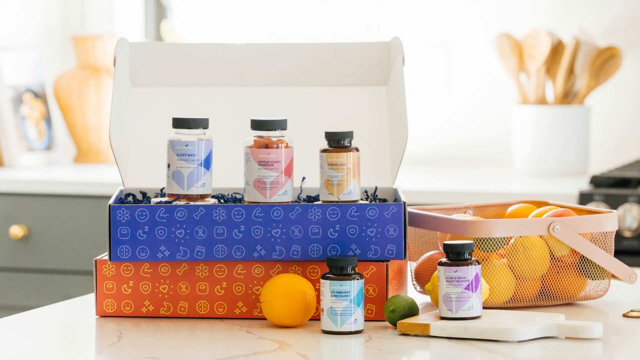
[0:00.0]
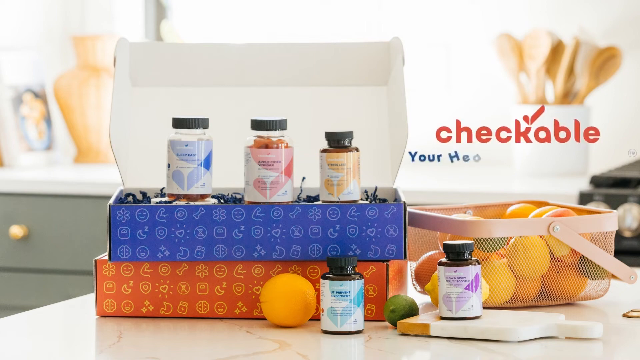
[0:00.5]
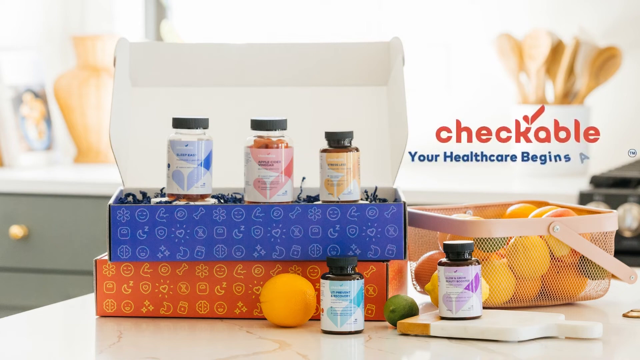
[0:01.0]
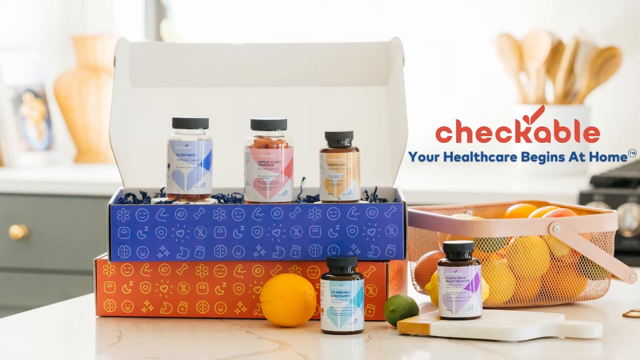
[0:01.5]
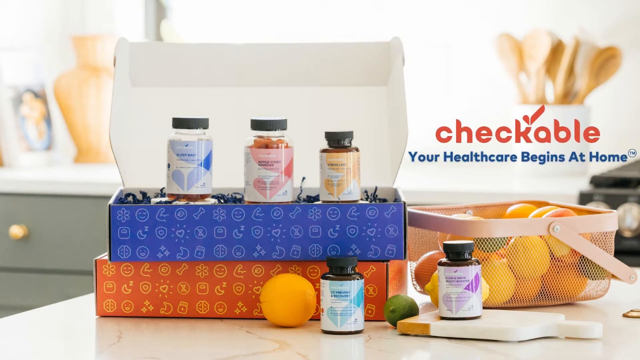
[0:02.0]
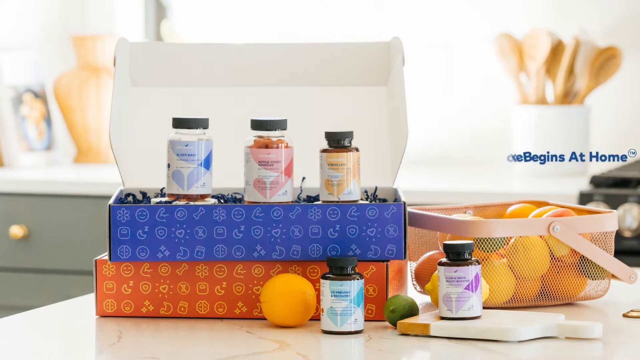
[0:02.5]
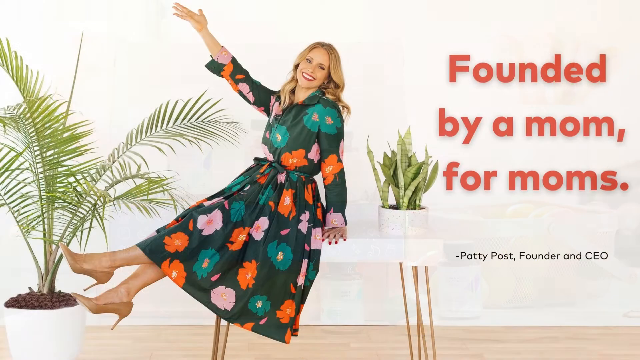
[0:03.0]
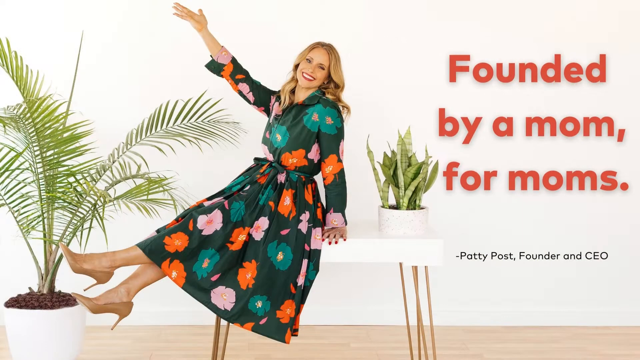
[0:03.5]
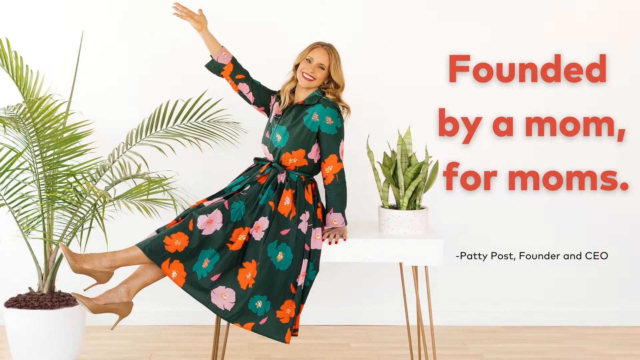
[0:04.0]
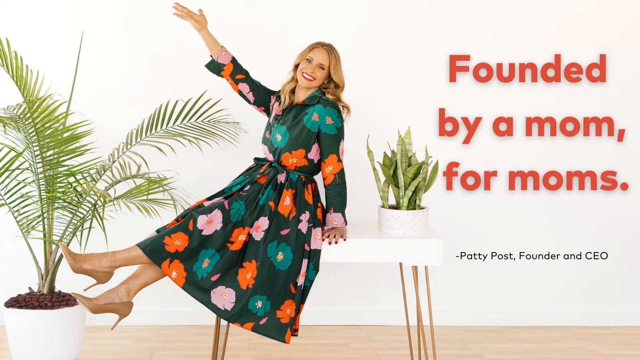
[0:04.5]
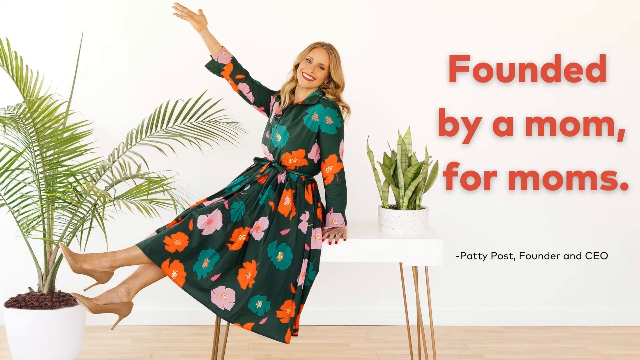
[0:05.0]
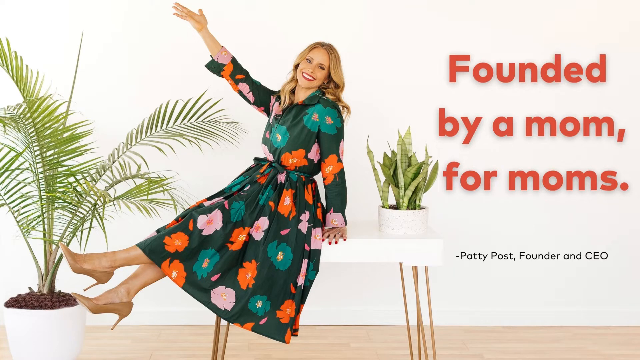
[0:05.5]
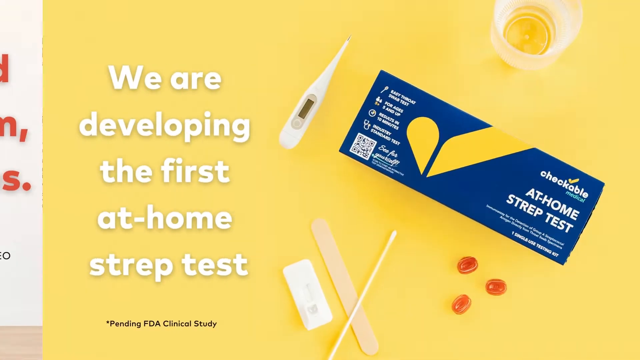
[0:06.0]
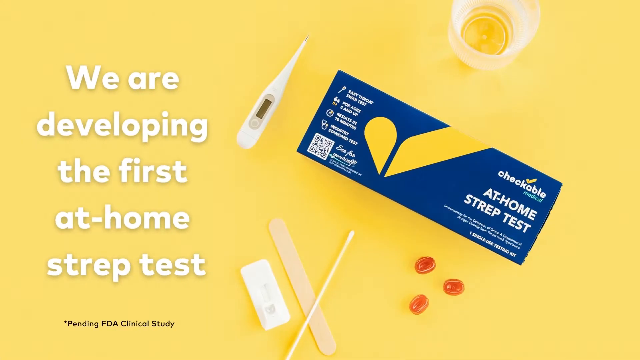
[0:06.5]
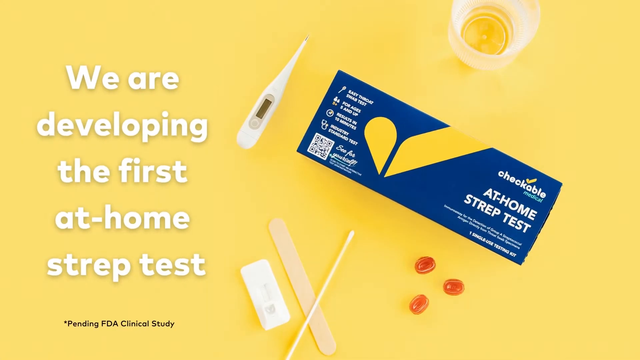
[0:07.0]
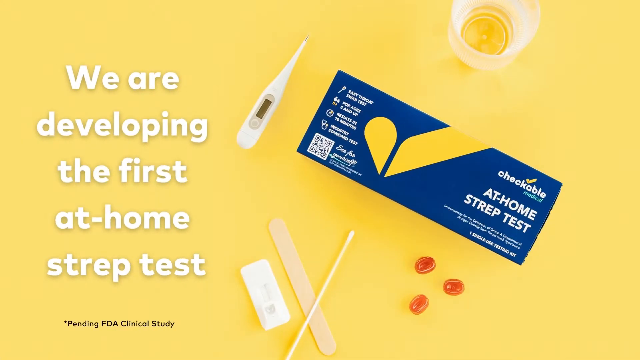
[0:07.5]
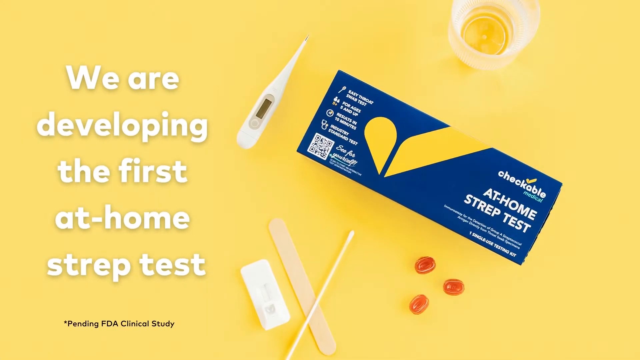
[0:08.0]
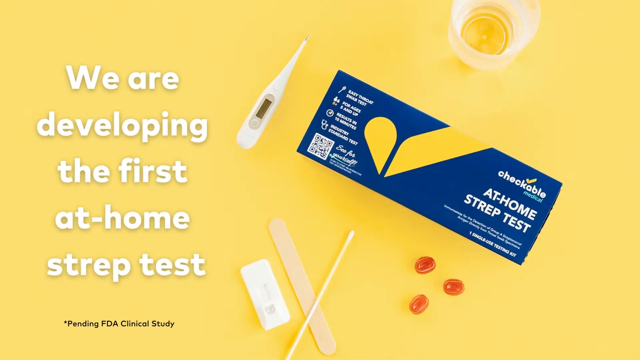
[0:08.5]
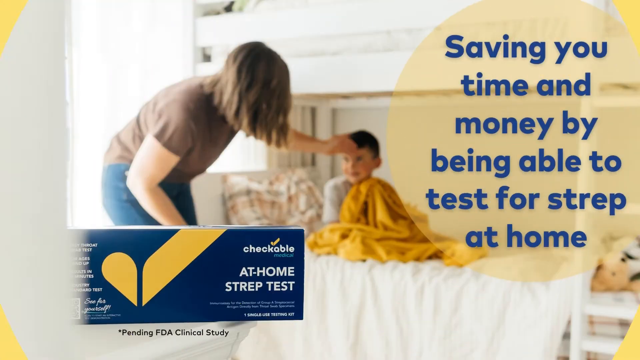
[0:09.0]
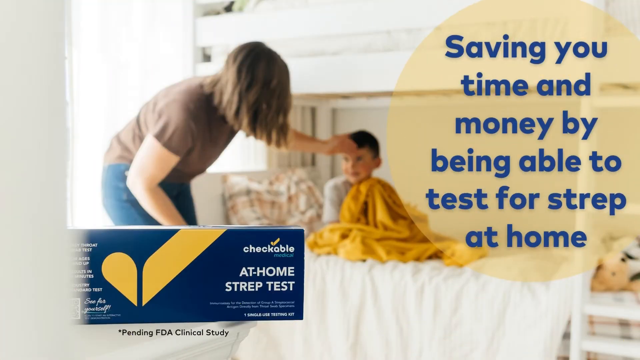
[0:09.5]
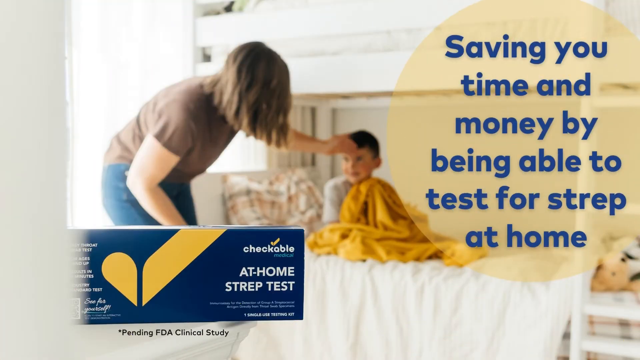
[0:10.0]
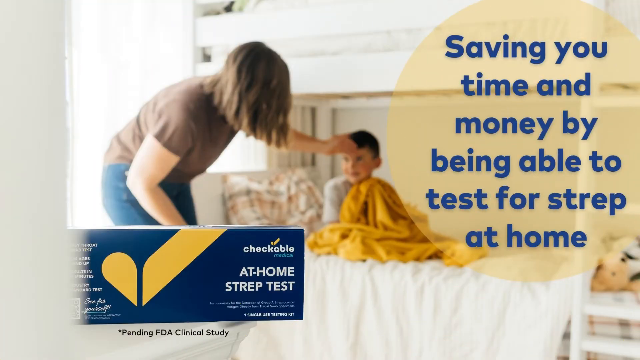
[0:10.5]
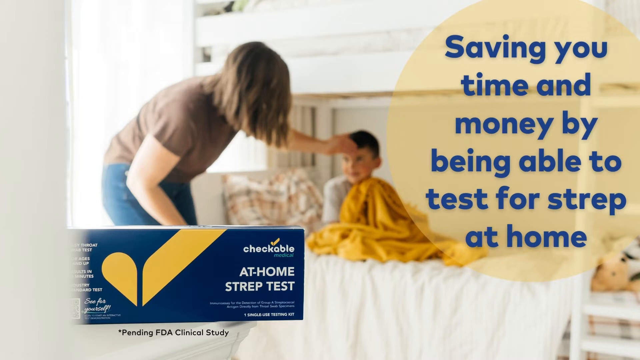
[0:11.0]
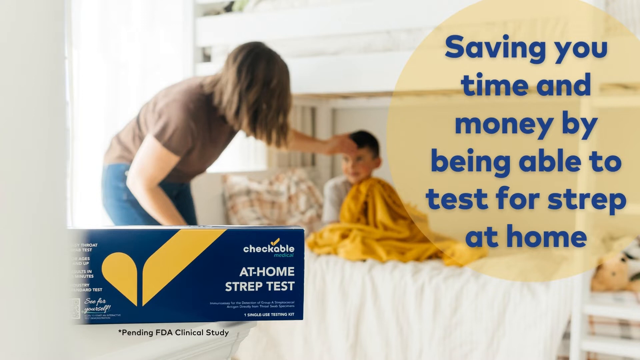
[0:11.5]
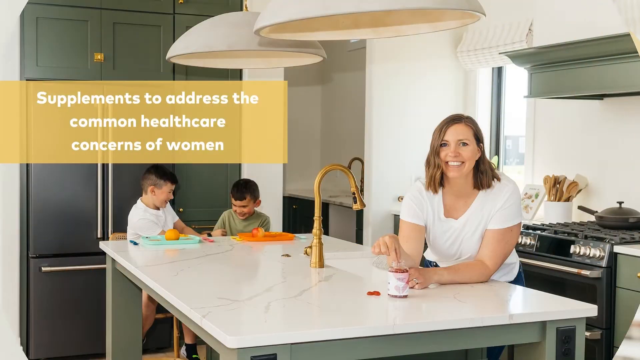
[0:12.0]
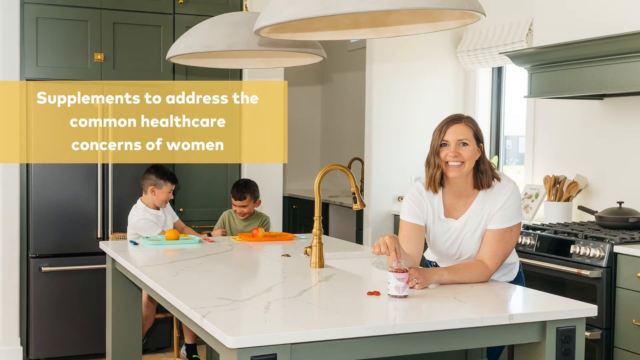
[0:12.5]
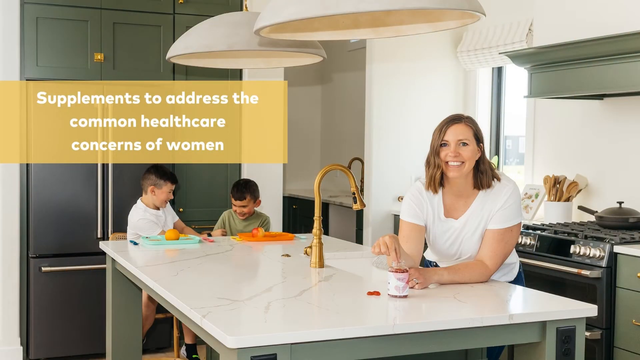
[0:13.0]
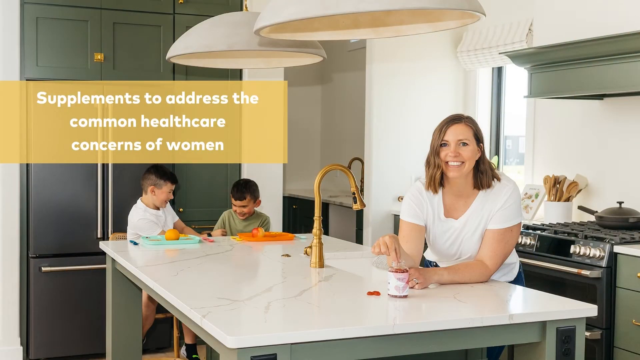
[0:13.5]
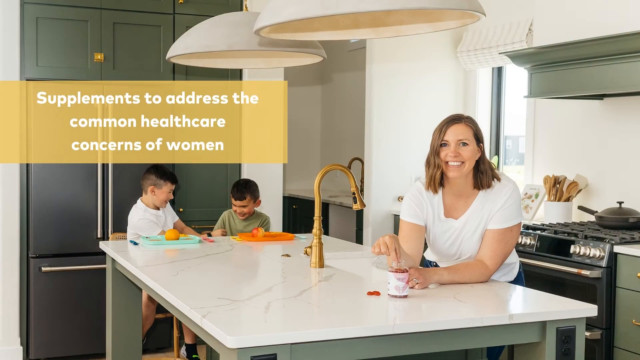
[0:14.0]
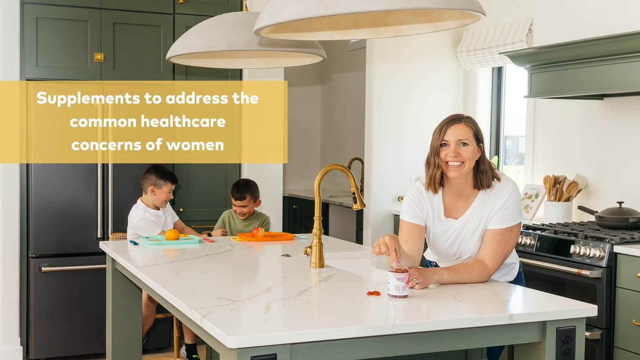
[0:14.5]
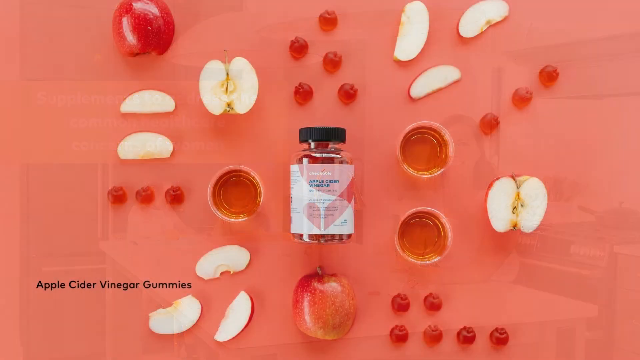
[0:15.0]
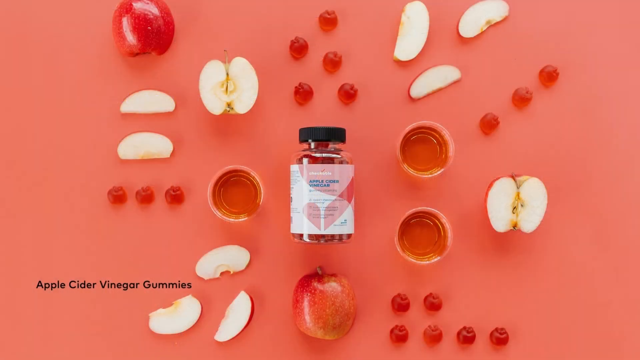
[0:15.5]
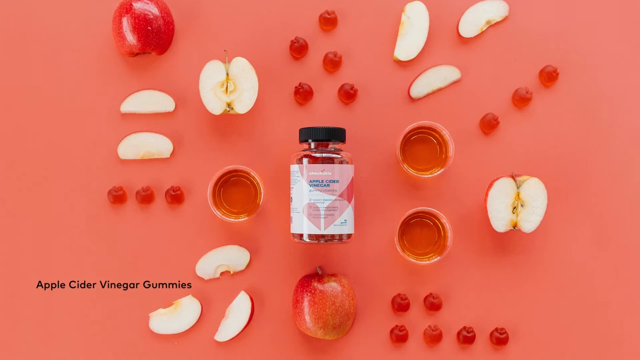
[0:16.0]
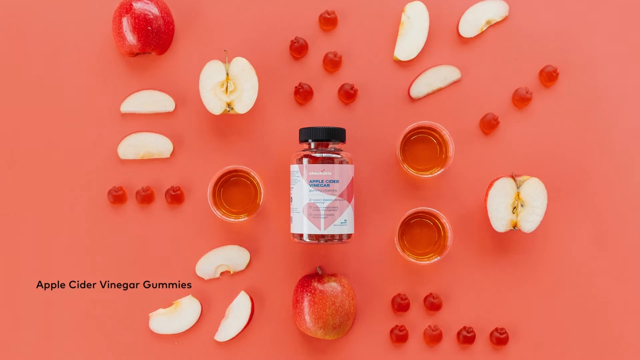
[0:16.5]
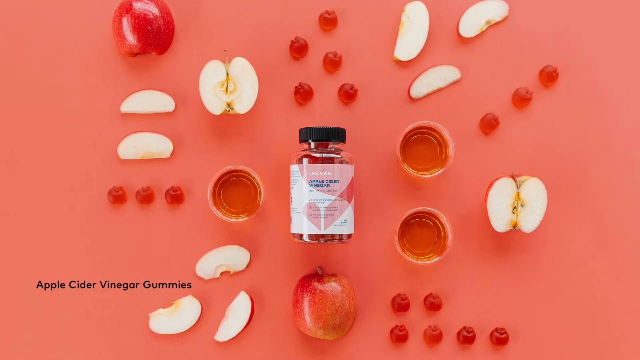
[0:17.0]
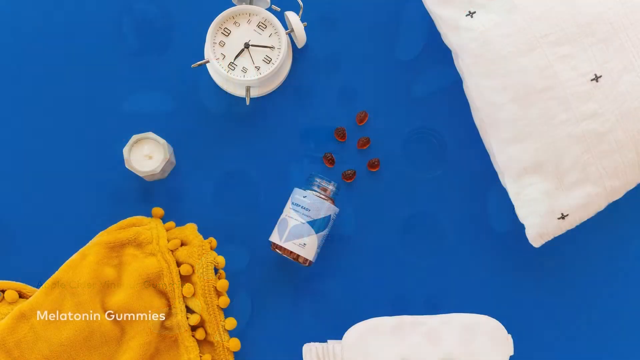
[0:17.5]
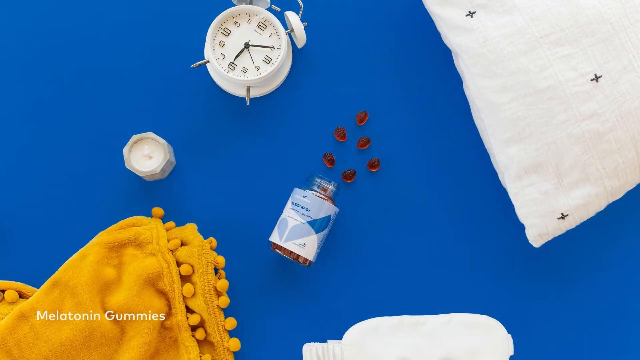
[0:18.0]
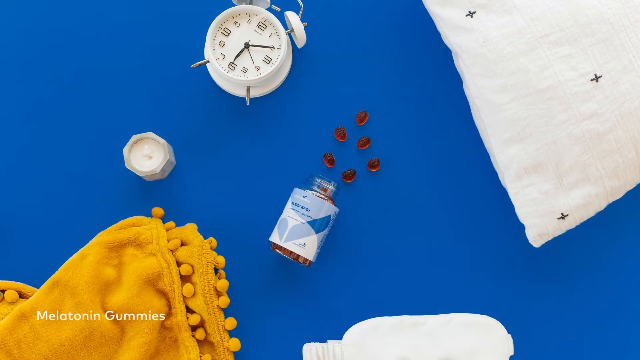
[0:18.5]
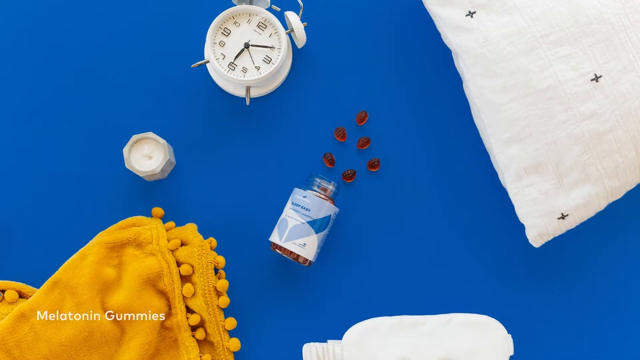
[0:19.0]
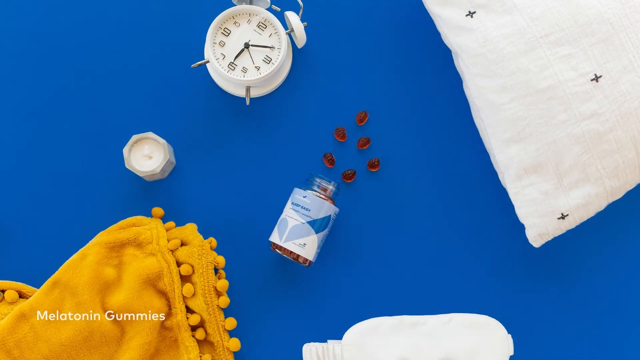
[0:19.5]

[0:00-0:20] The video presents something called Checkable, which looks like health care from home. Text reads "we're developing the first at-home strep test" and "saving you time and money." More text reads "checkable health care begins at home" and "founded by a mom for moms," along with a message about saving time and money by testing from home. Checkable also offers supplements in a gummy format, and a picture shows all the different flavors of supplements stacked up on a box next to an orange basket. A kitchen is in the background, including a vase with several kitchen utensils inside it and another vase on the left-hand side of the kitchen counter. Patty Post is the CEO and founder.